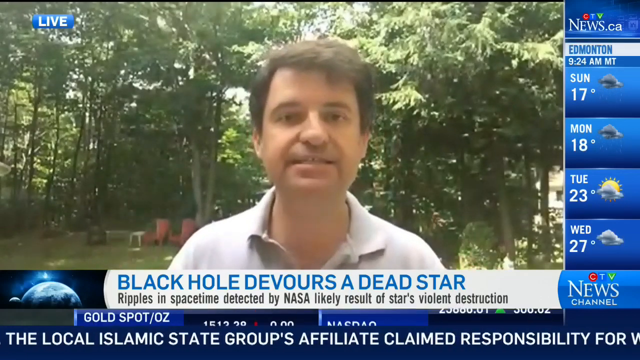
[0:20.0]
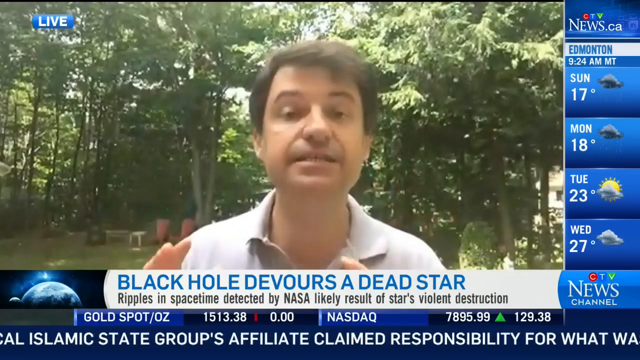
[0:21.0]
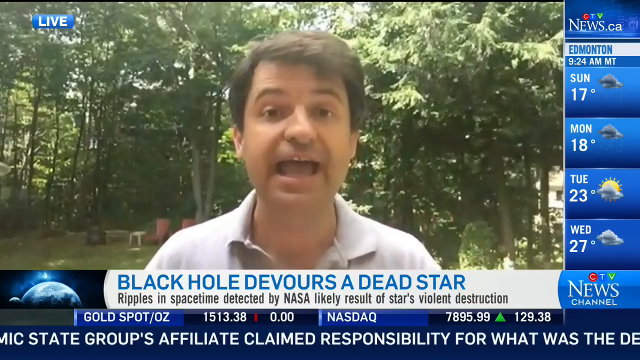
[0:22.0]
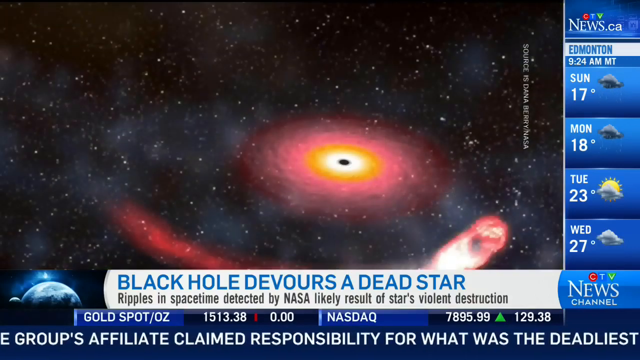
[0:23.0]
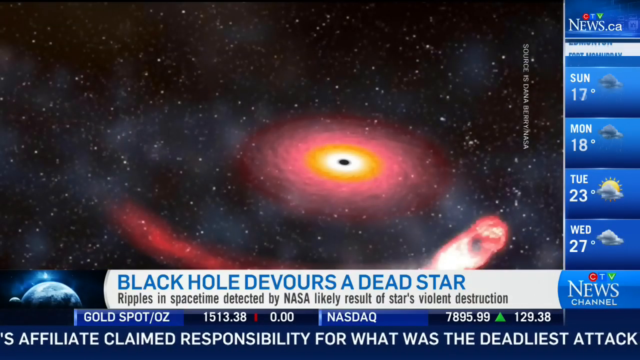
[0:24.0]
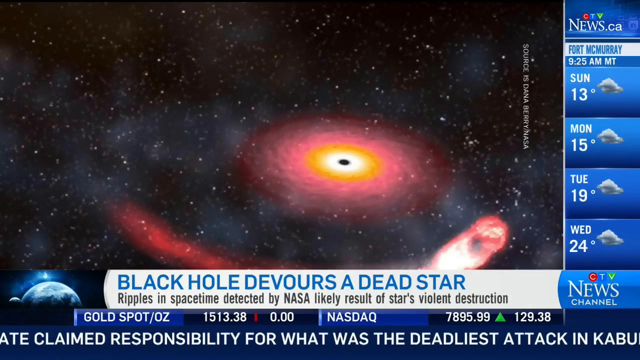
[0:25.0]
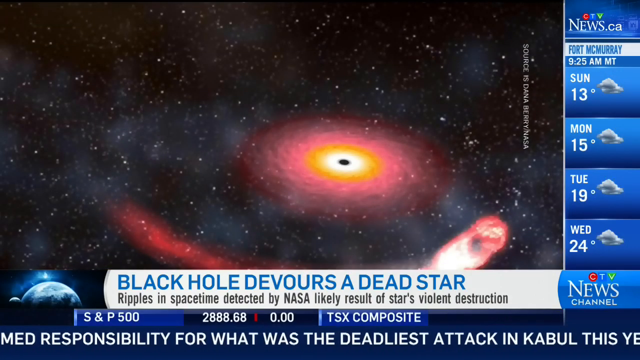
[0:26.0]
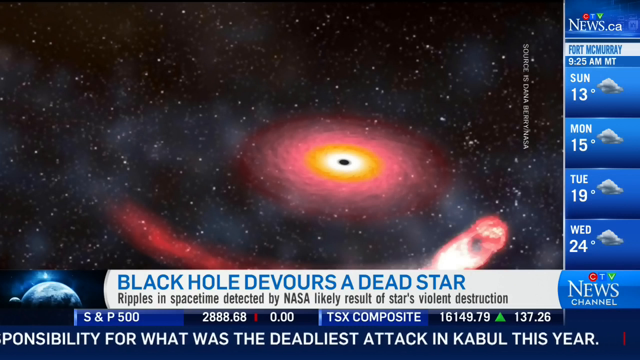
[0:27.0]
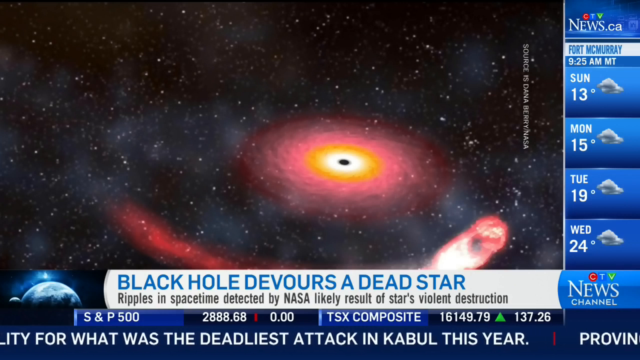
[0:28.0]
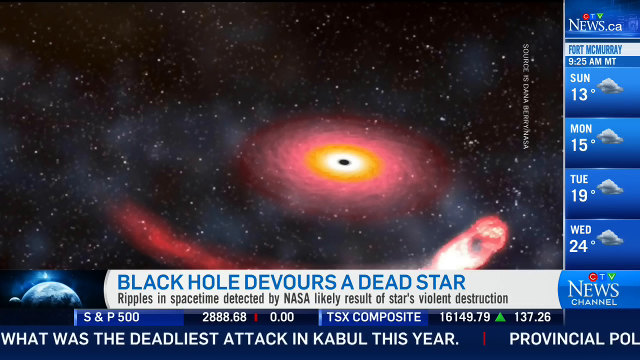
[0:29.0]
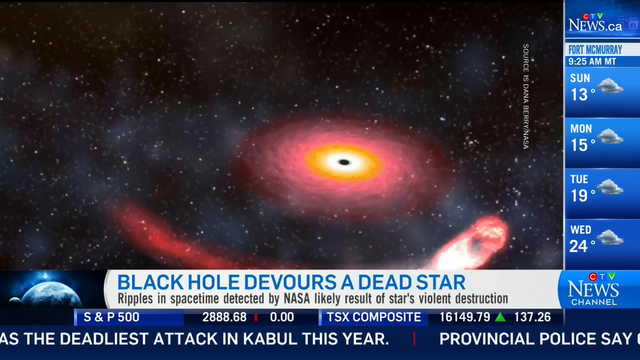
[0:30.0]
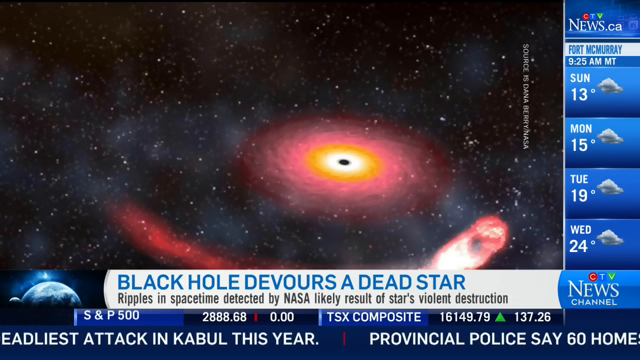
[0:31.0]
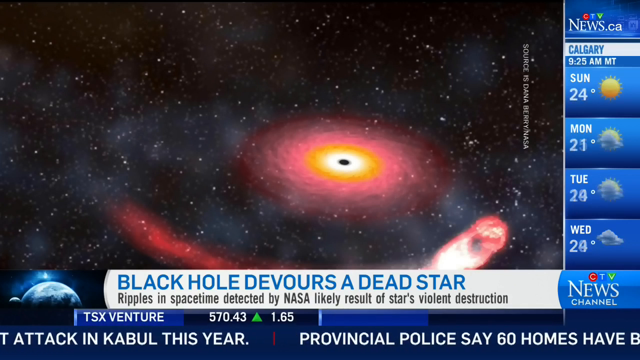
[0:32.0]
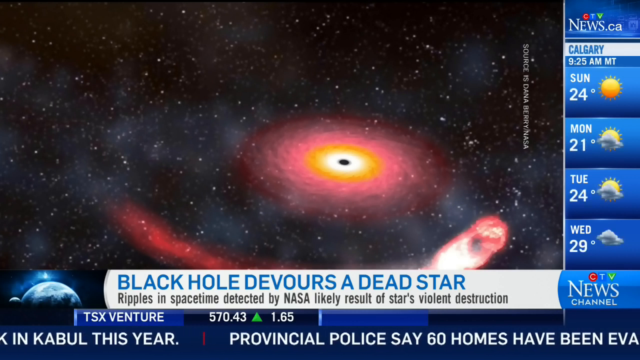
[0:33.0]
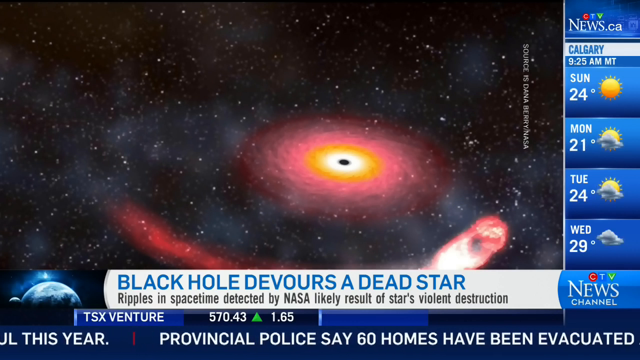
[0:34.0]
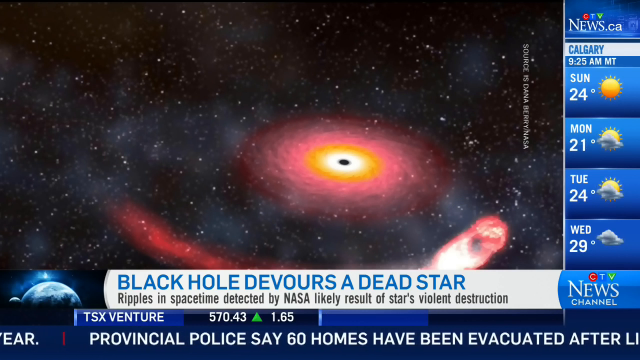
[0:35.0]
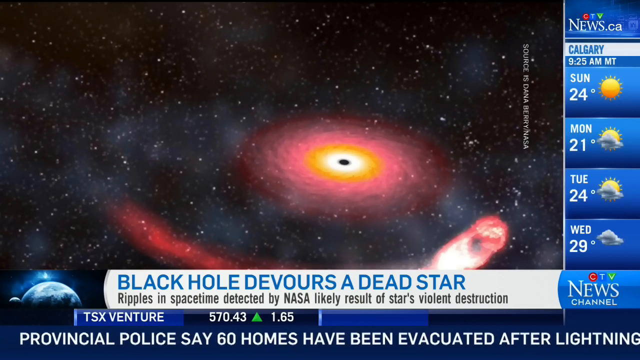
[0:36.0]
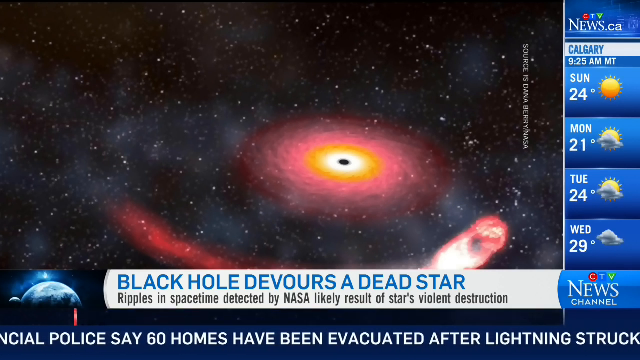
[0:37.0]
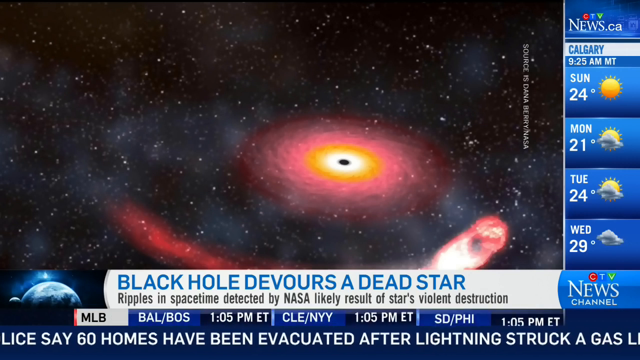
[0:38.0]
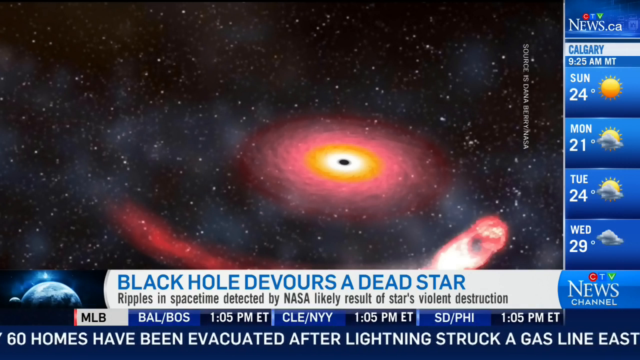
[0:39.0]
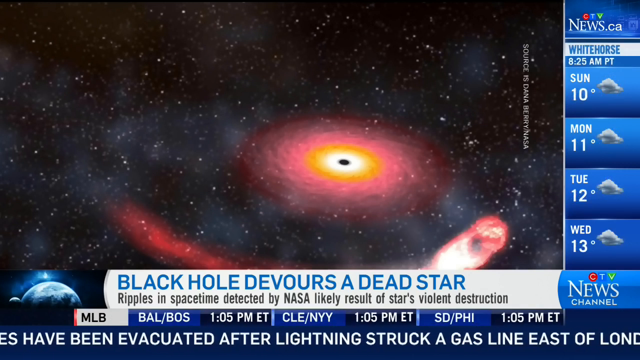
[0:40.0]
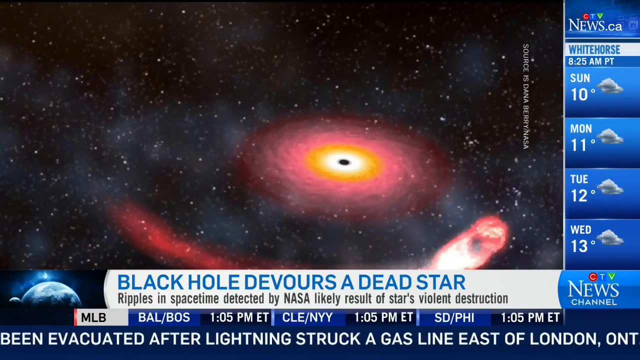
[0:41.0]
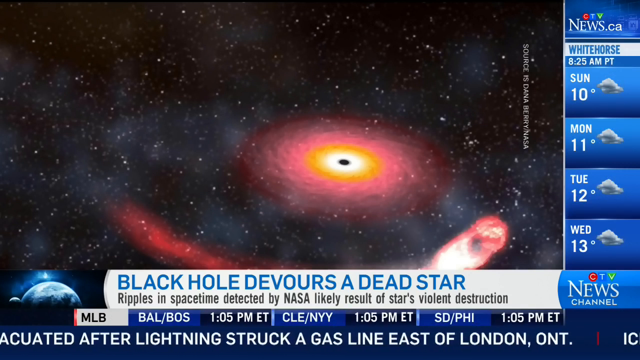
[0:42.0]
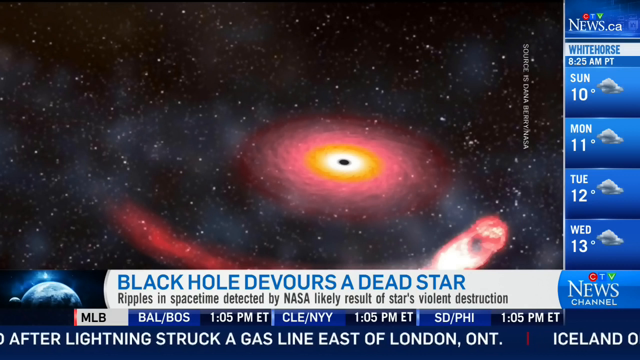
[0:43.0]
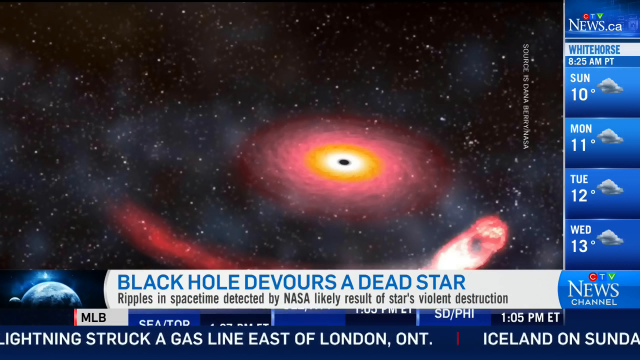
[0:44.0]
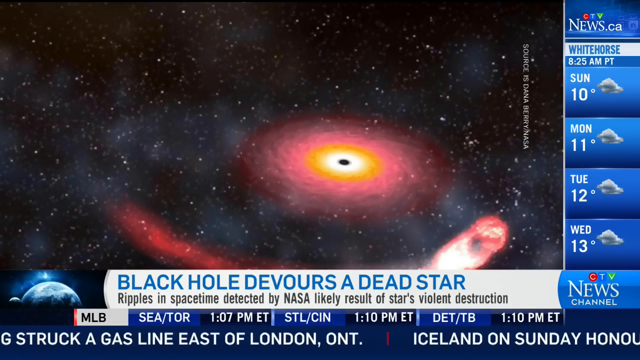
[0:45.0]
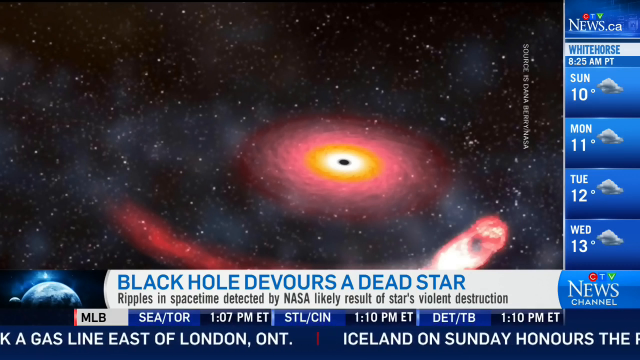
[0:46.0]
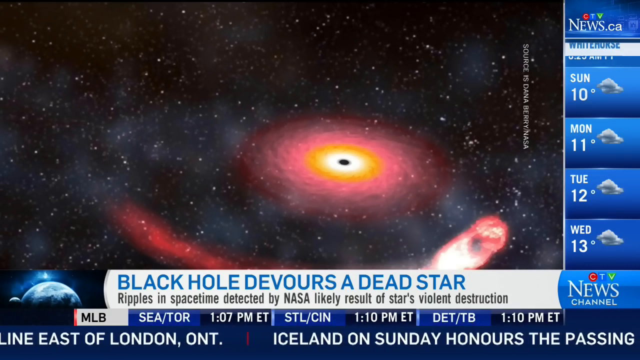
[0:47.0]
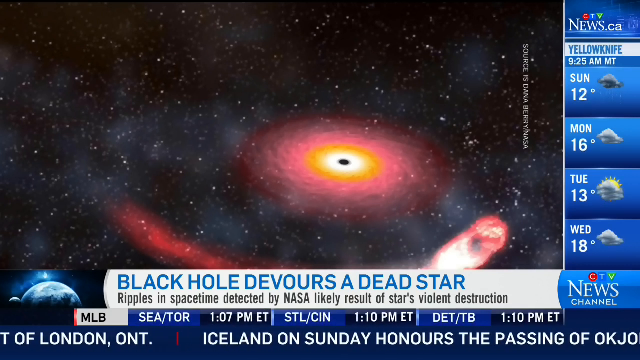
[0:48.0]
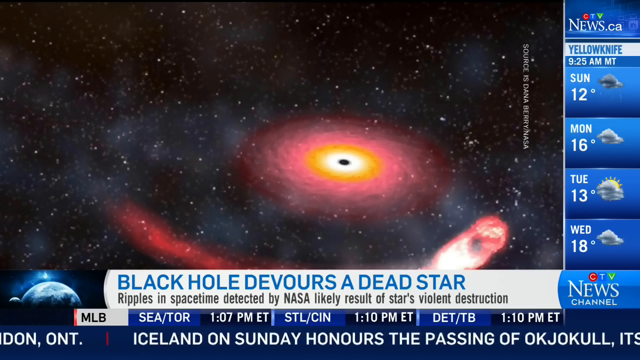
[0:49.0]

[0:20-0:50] The man moves his hands as he explains. An image of what seems to be a black hole appears: a black spot at its center is surrounded immediately by a whitish color, then yellow, then a reddish color, then brown. Near its border is what seems to be a dead star, represented by possibly an asteroid or a fireball moving through space, and the black hole seems to devour it. On the right side of the screen is something like a weather report for Fort McMurray at 9:25 a.m. MT: Sunday 13 degrees and cloudy, Monday 15 degrees and cloudy, Tuesday 19 degrees with clouds, and Wednesday 24 degrees with clouds.